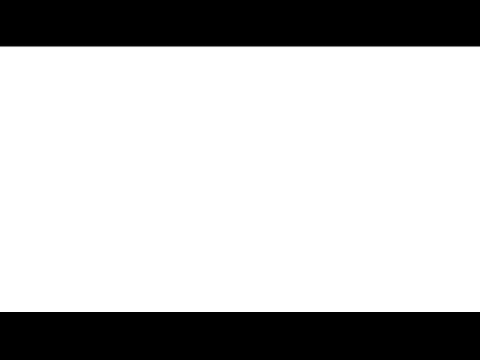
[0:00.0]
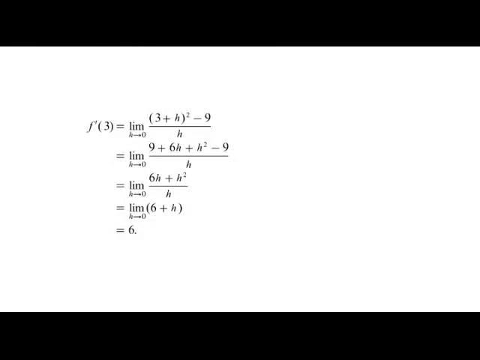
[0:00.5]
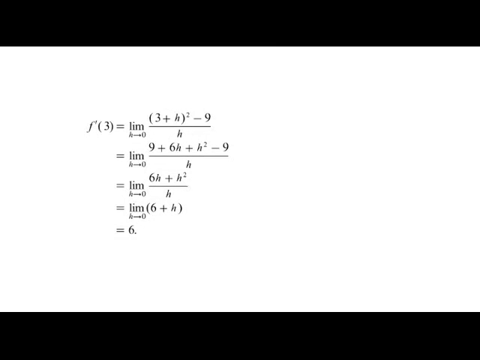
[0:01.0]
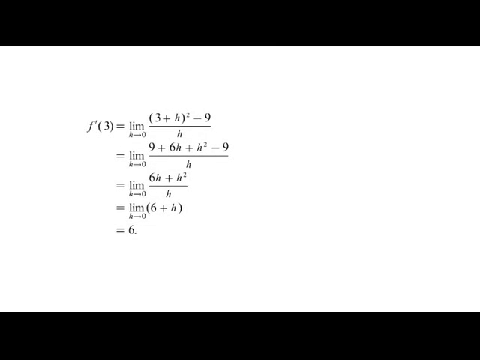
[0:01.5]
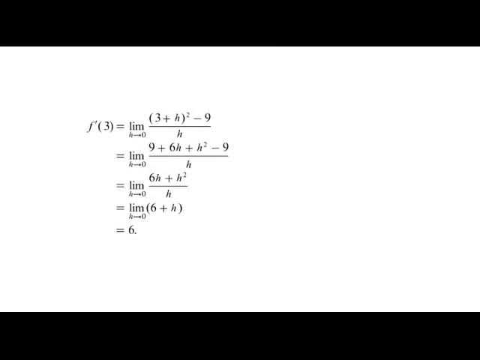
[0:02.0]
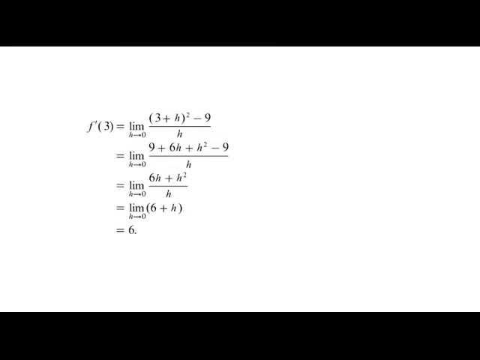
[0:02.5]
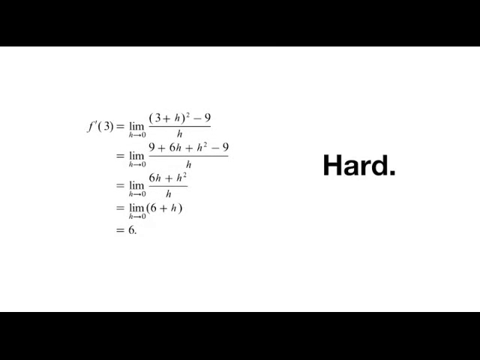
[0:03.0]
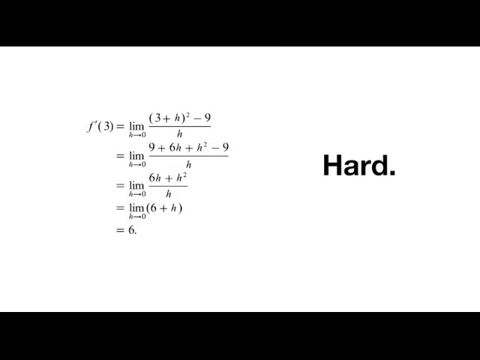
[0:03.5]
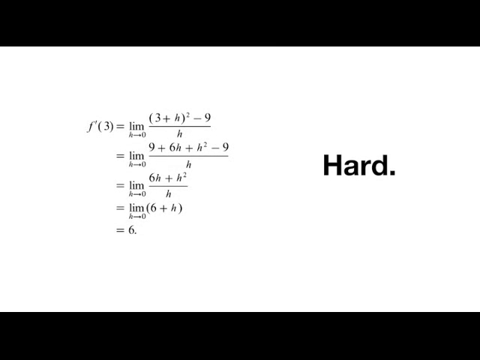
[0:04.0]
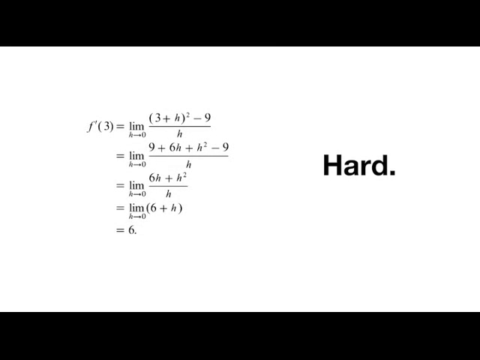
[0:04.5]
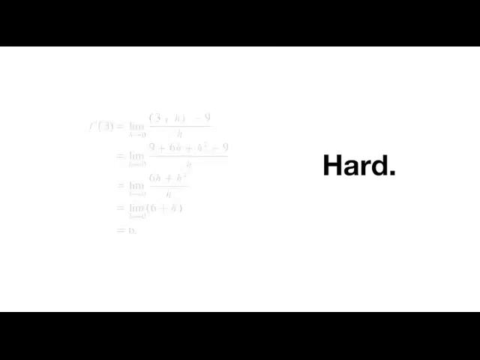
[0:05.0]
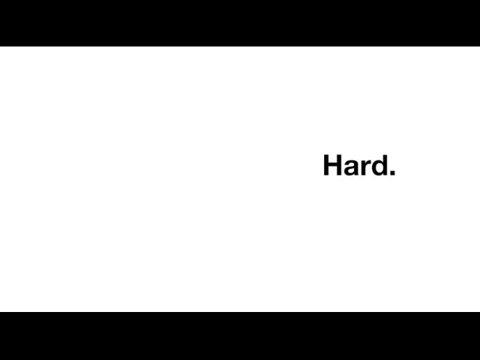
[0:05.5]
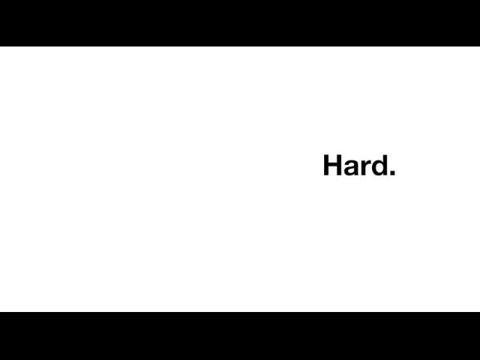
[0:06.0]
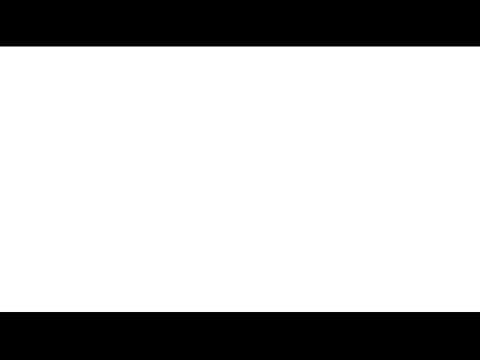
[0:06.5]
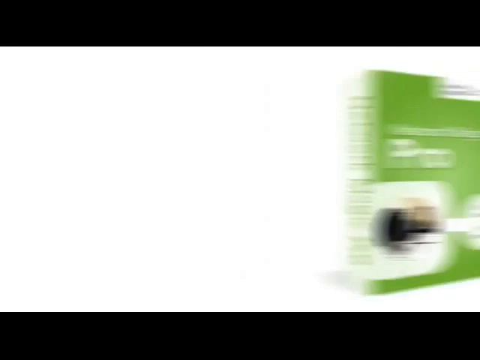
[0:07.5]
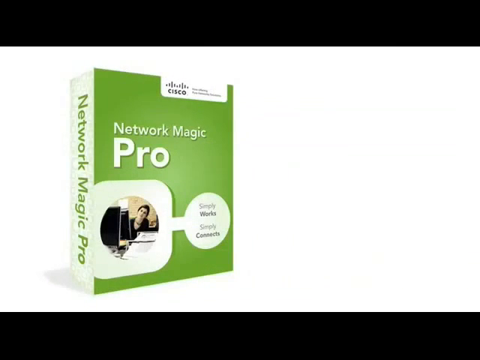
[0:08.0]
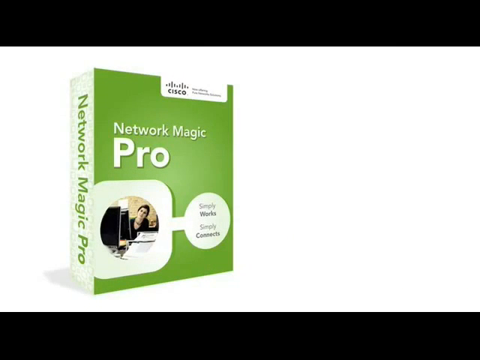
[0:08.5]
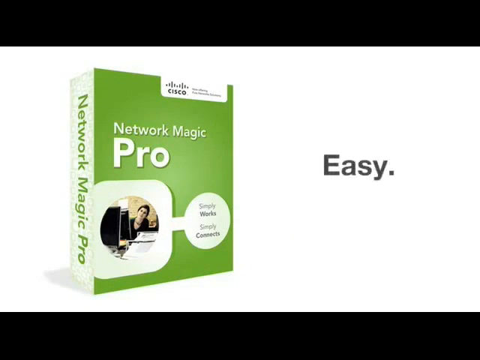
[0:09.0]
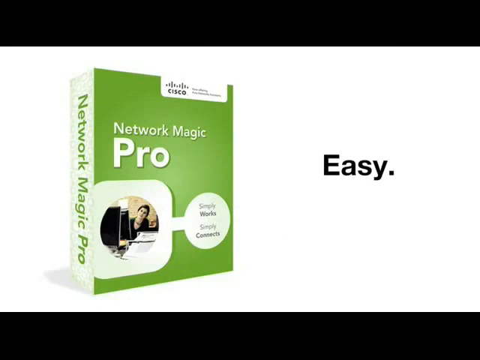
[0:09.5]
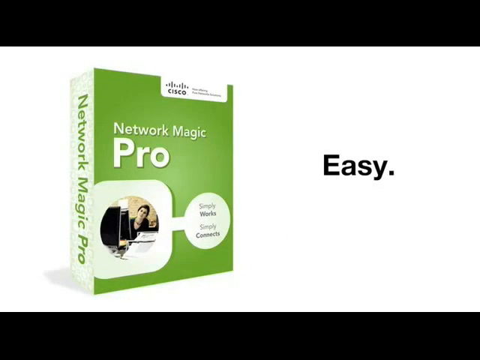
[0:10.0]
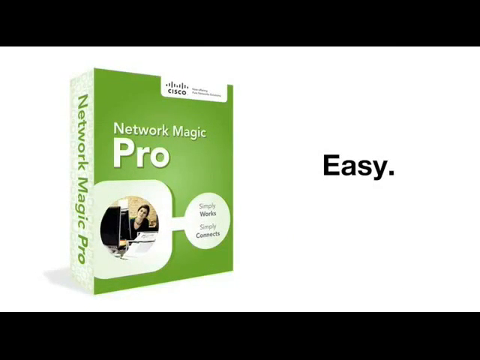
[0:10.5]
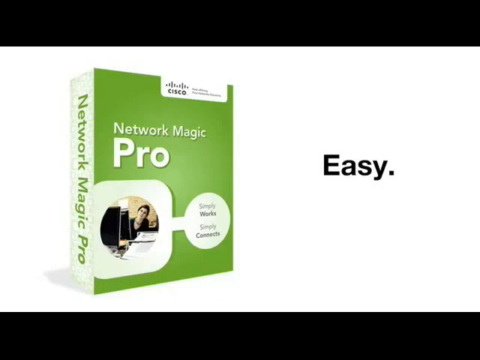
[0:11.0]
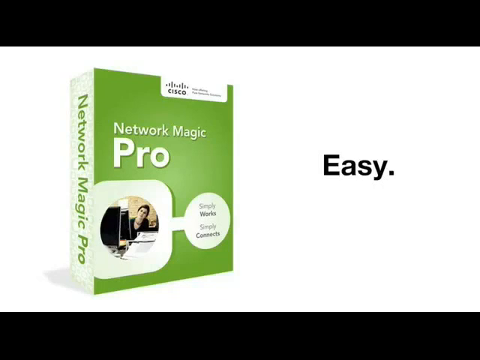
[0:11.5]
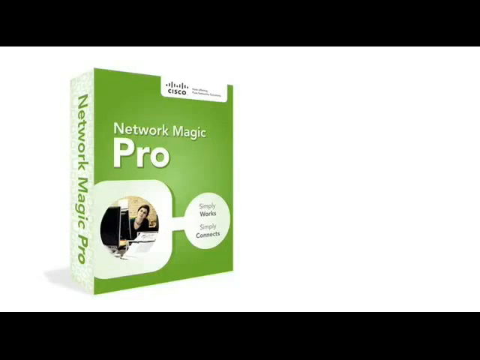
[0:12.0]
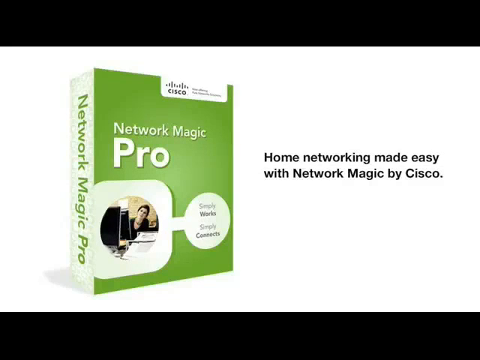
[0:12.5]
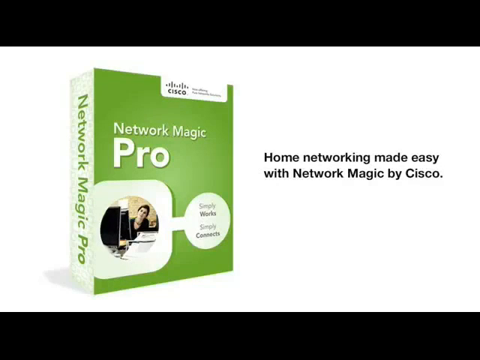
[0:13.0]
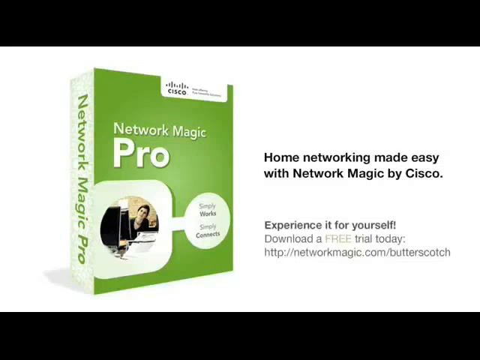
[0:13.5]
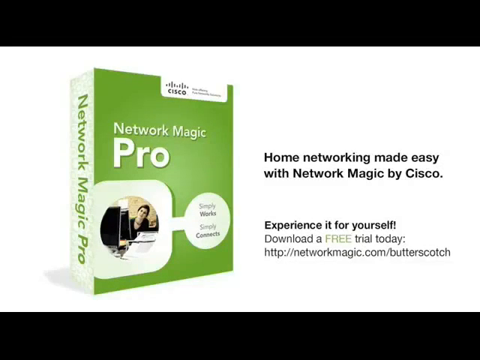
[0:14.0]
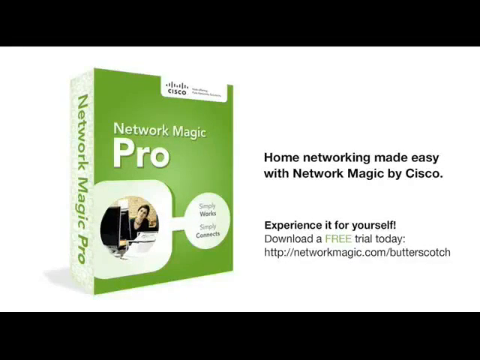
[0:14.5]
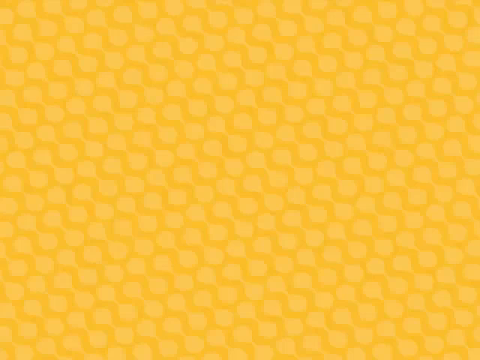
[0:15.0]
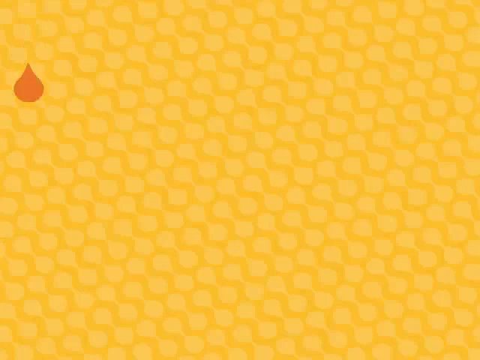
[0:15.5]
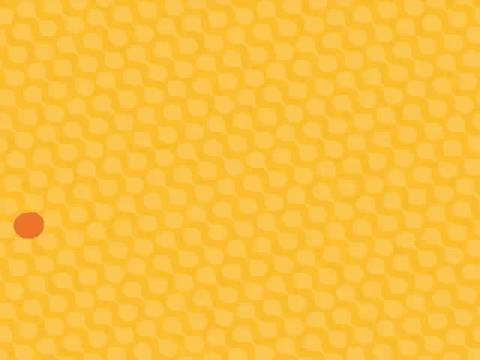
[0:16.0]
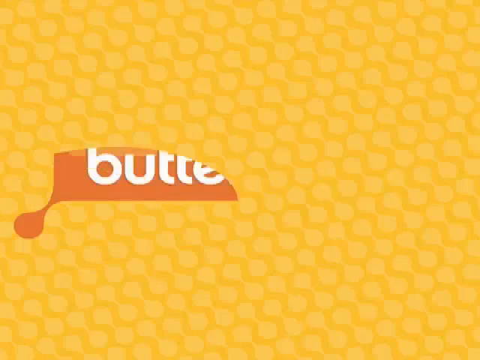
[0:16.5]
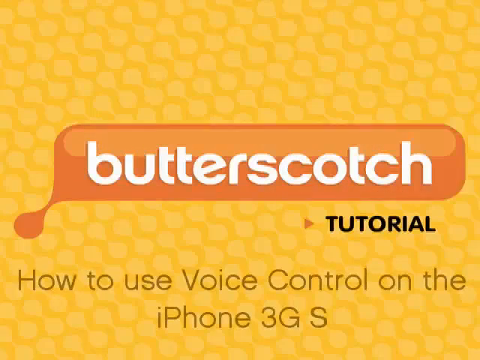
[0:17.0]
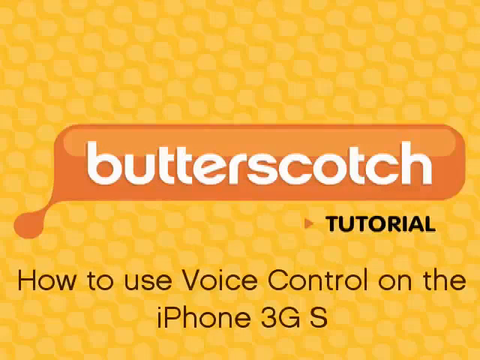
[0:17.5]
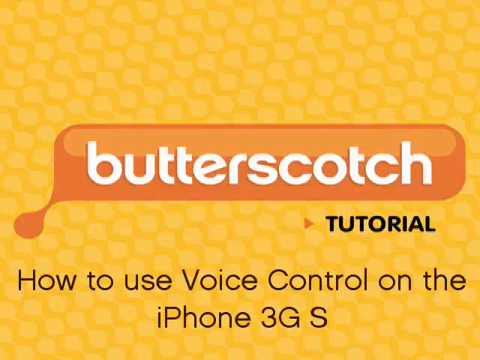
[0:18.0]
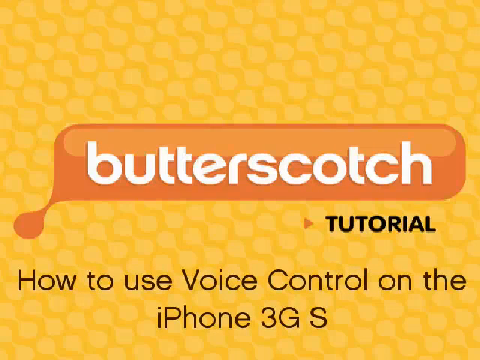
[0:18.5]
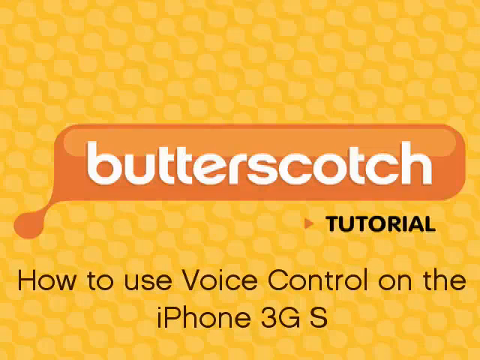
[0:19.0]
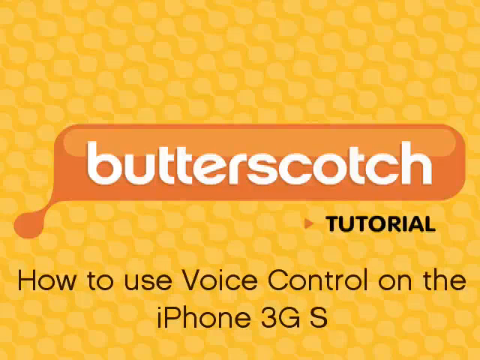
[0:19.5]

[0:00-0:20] Math calculations appear with the word "hard" next to them. Next comes a book or package, possibly a software package or a book, with the word "easy" beside it. After that, a Butterscotch book or software appears, apparently something that can be downloaded on an iPhone. Toward the end, images of young people are shown.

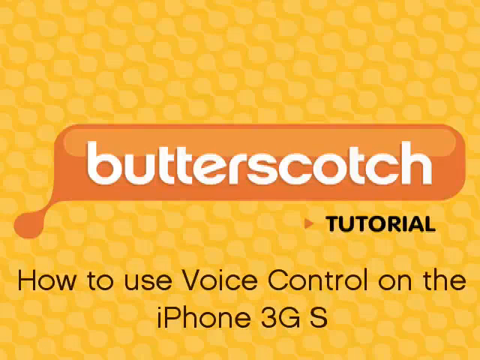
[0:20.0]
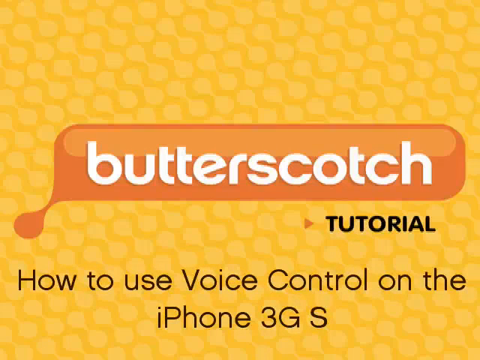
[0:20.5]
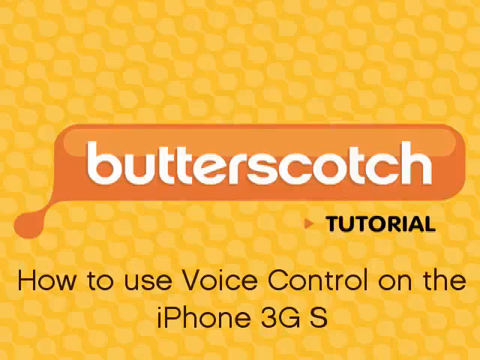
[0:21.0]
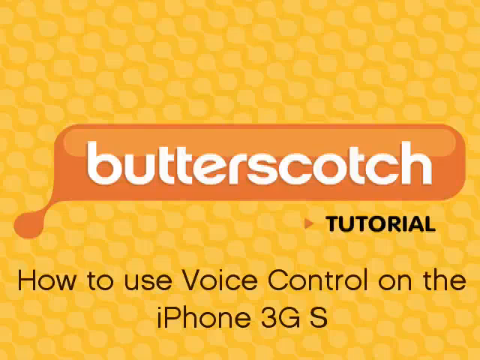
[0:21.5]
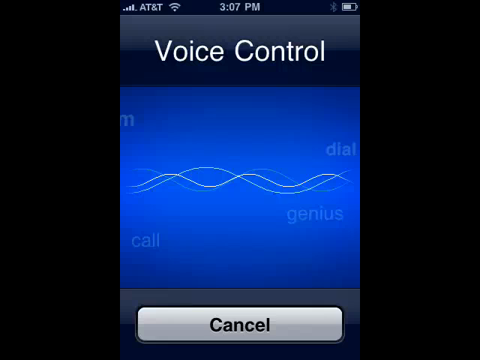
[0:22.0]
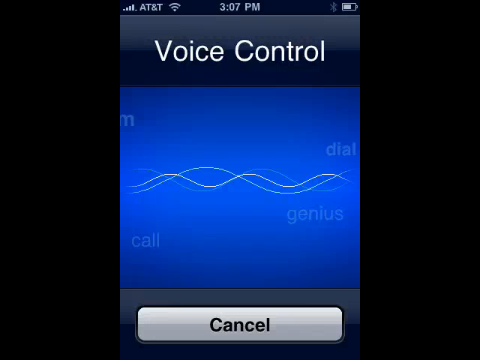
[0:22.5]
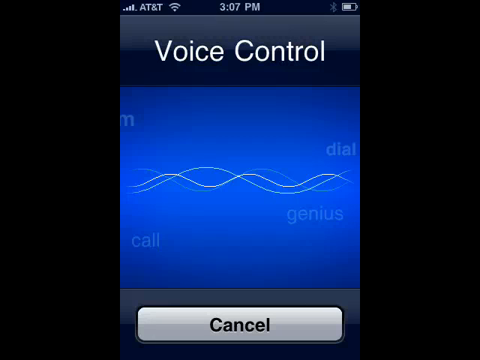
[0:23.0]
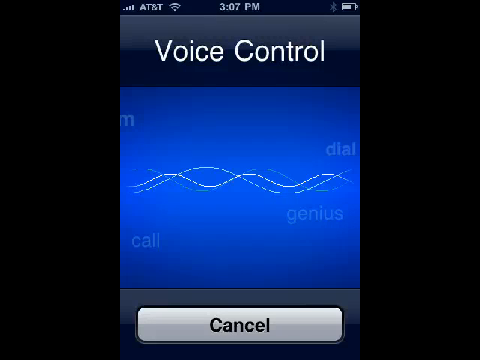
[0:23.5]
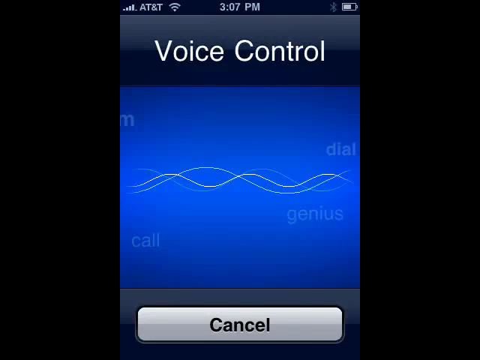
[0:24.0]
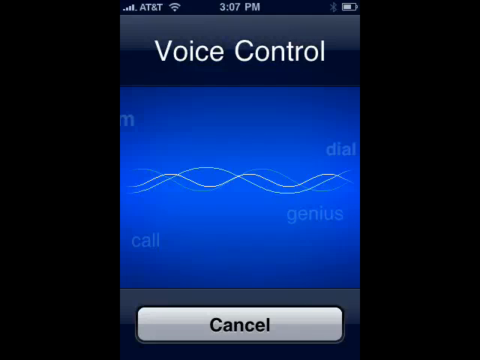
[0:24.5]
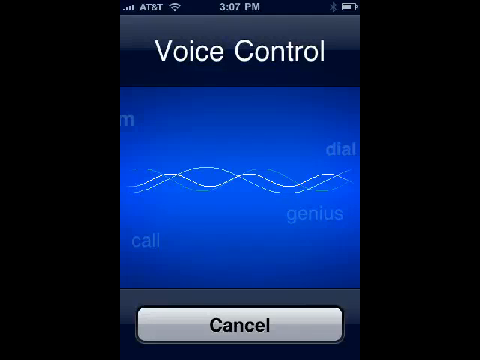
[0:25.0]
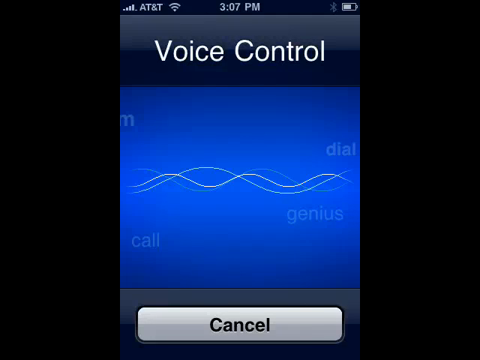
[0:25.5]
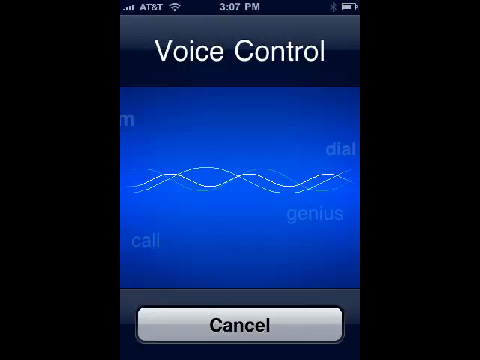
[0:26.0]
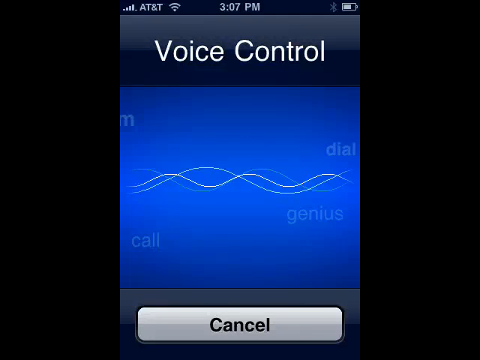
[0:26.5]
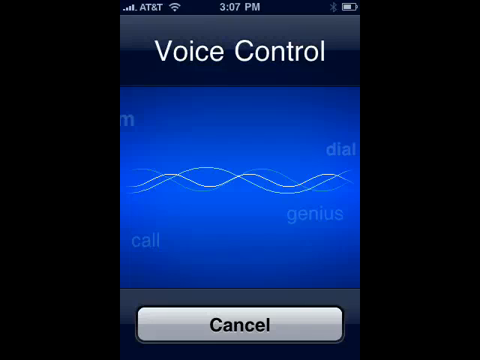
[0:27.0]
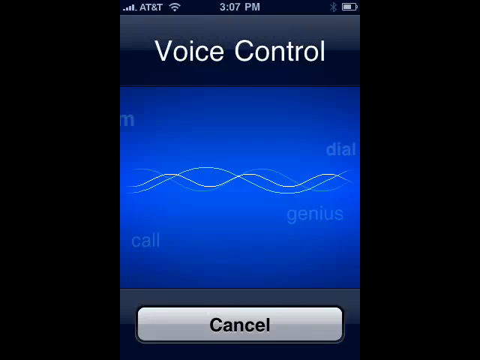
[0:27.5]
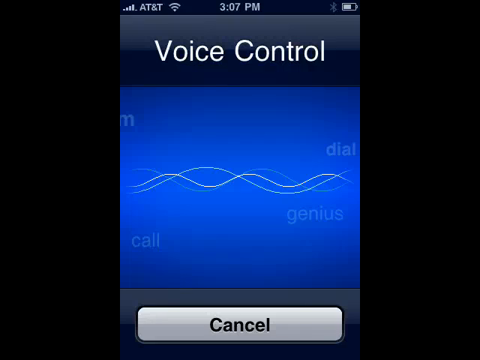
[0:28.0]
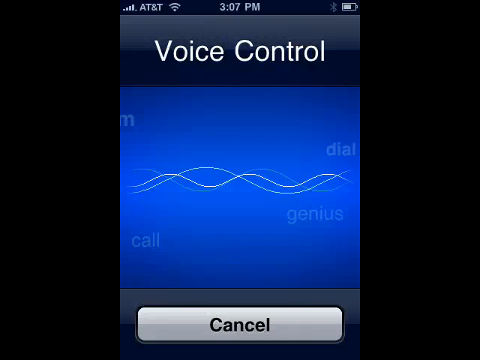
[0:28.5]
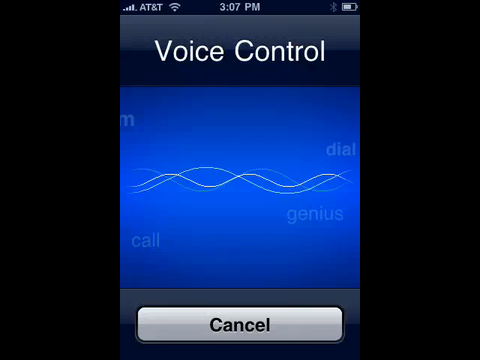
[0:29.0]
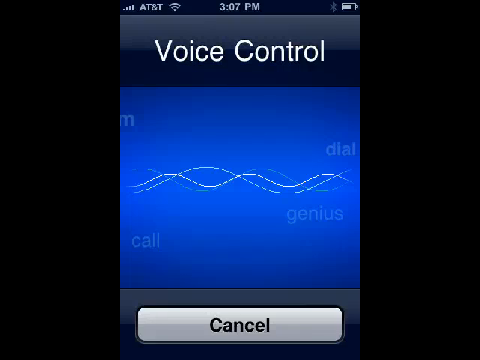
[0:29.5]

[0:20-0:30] The math calculation labeled "hard" appears, followed by a network product from Cisco labeled "easy". Next comes a package from Butterscotch Tutorials, apparently for use on an iPhone. Voice control on an iPhone is referenced, seemingly a feature for asking questions such as math questions. Toward the end, an illustration shows a person using voice control; this person is possibly one of the developers or testers of the system.